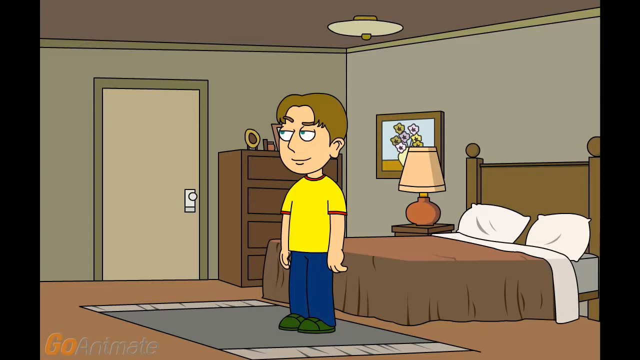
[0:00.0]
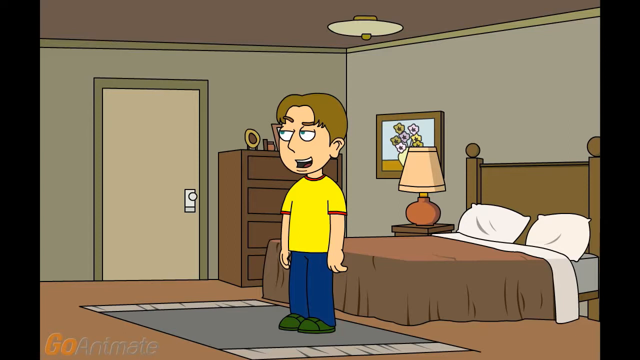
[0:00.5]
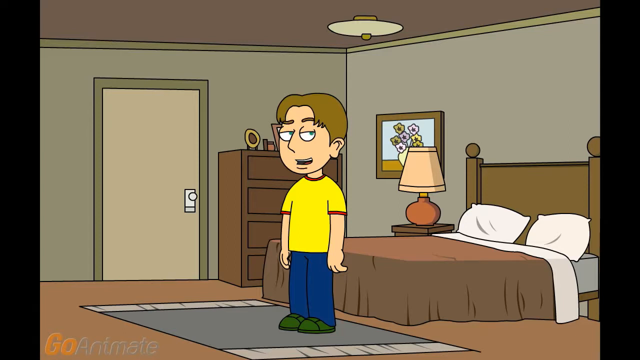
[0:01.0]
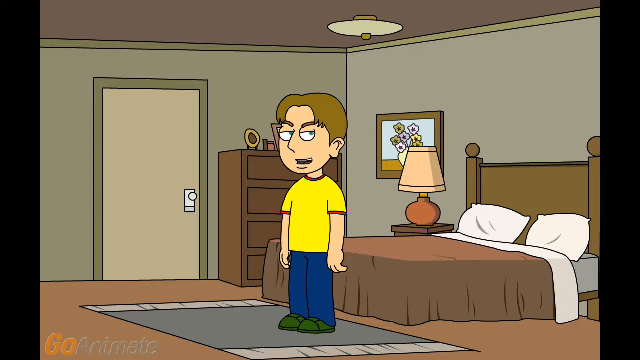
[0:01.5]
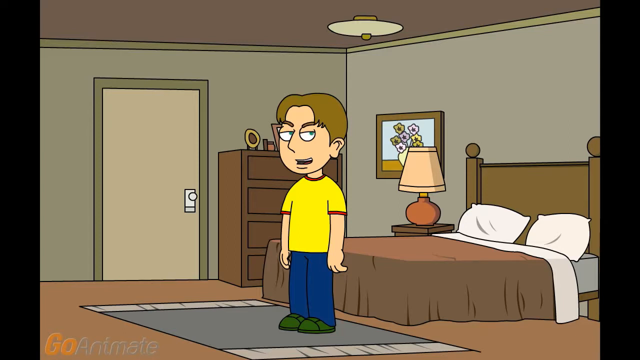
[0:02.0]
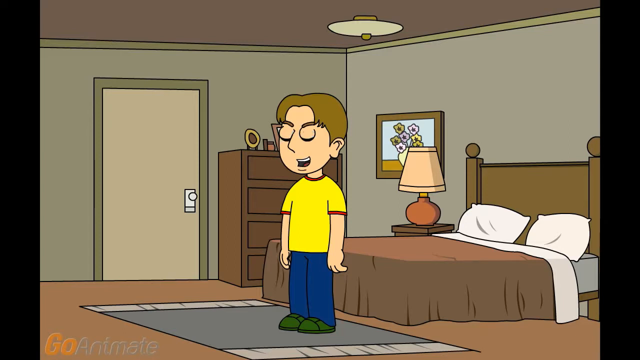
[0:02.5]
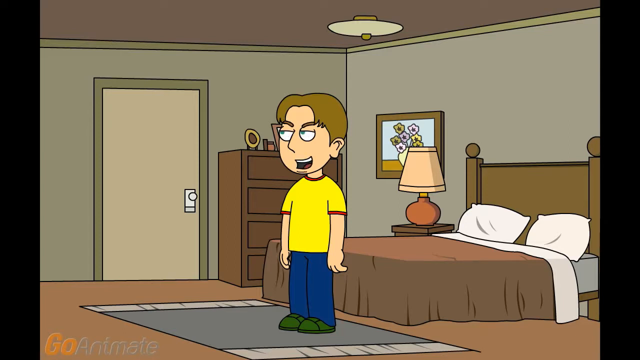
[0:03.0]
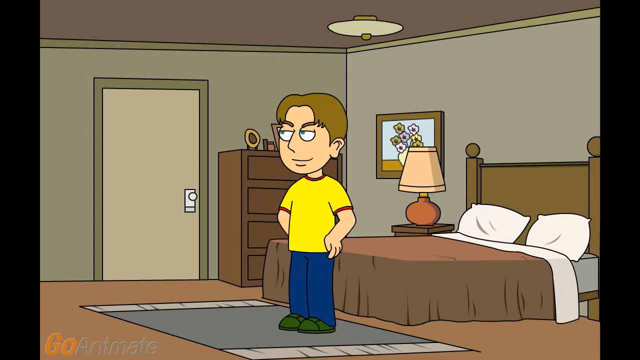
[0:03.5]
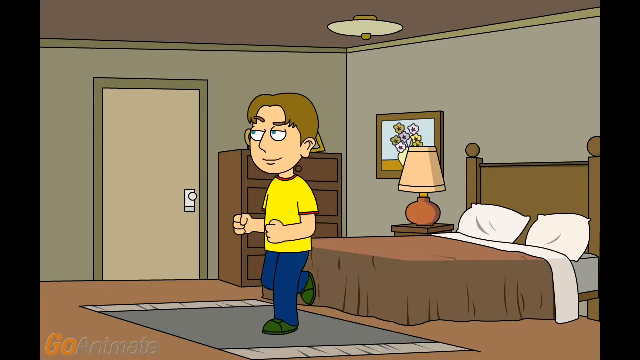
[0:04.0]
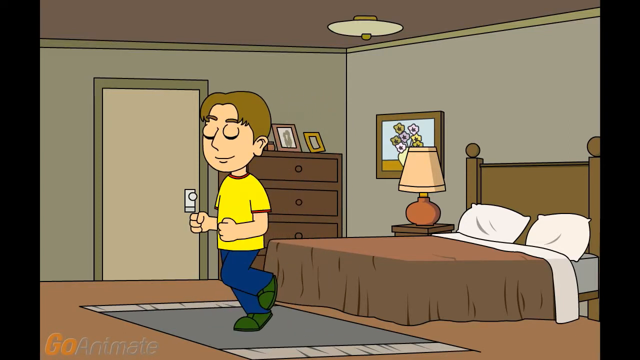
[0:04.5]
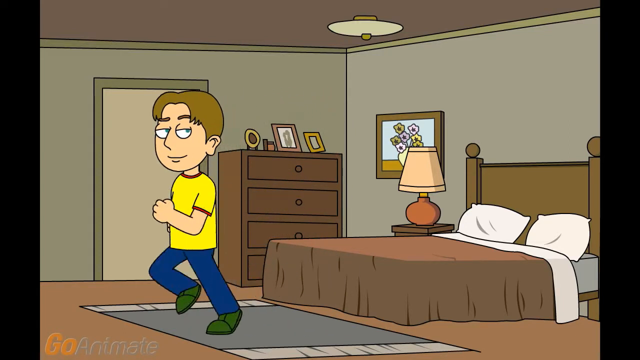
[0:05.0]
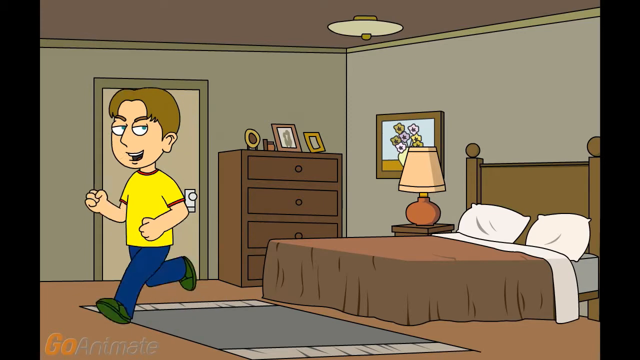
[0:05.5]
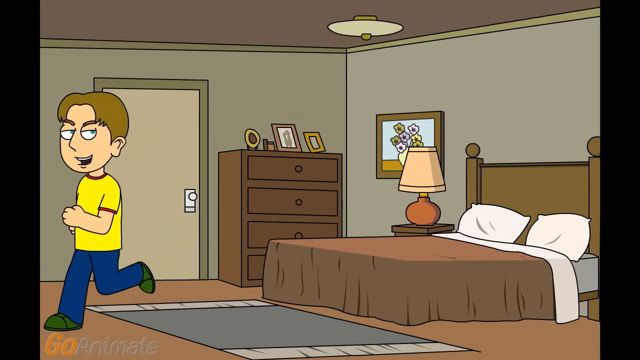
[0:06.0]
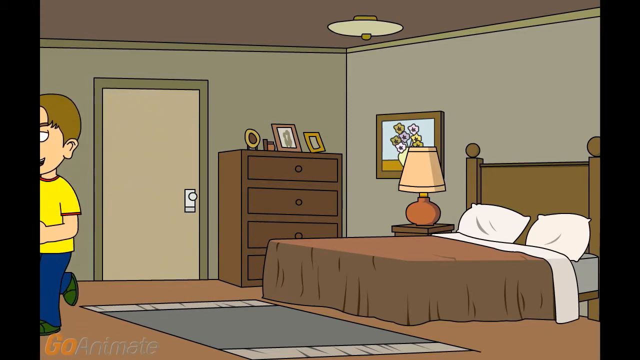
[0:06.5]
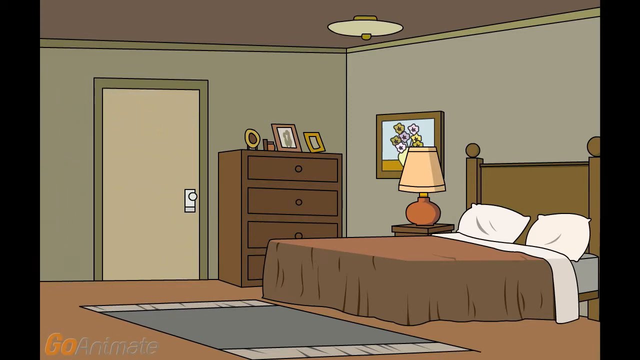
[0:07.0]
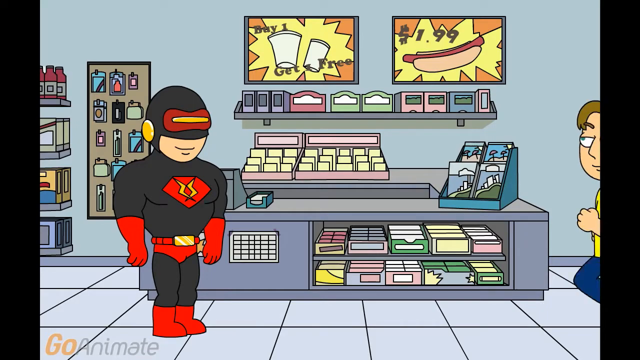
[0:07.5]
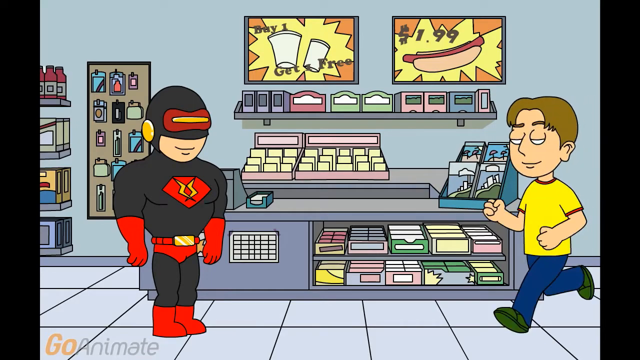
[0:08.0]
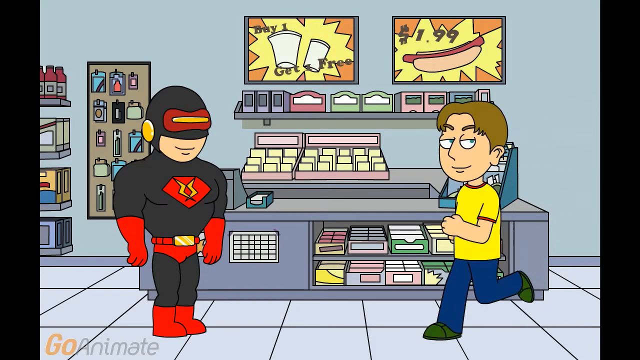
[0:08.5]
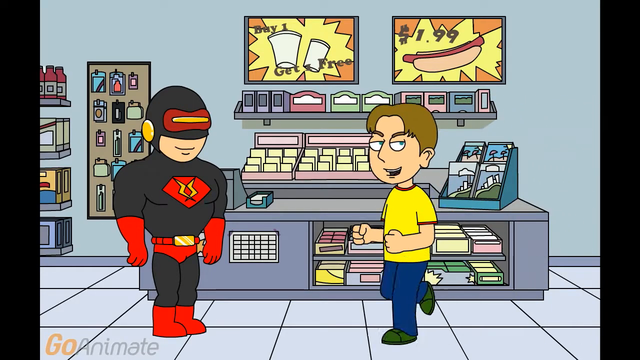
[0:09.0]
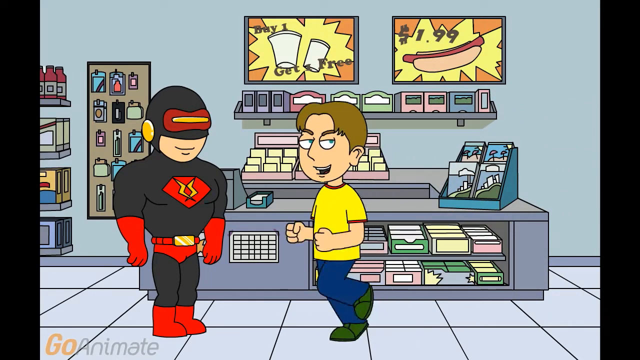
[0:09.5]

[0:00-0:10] A cartoon opens on a male in a fairly plain bedroom. He is somewhat brown and stands there wearing a yellow t-shirt with red accents. He has a kind of devious look on his face, as if he is thinking of something to do. He jogs off from right to left. The scene suddenly cuts to what looks like a convenience store. A superhero, who looks somewhat like Iron Man, is on the left. The same male character comes in from the right, still with a somewhat devious look on his face, and walks up to the superhero.